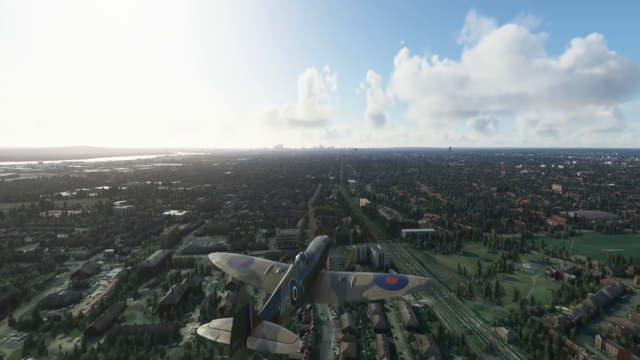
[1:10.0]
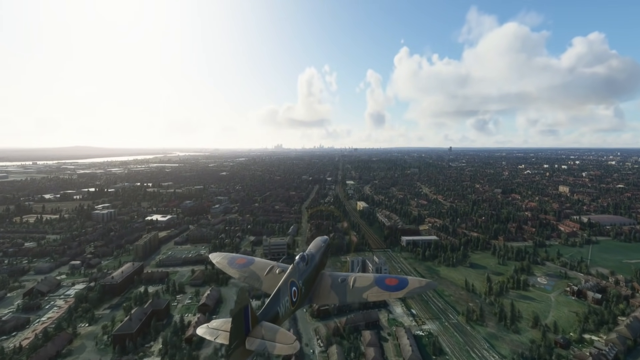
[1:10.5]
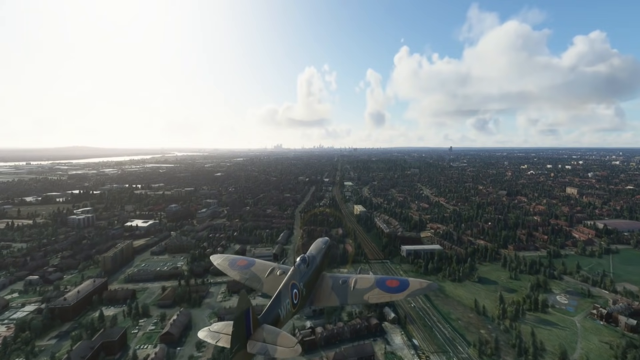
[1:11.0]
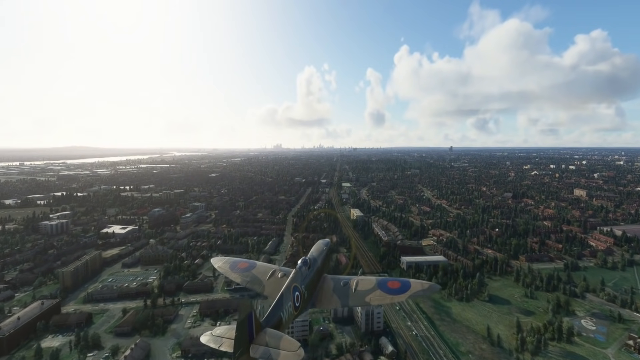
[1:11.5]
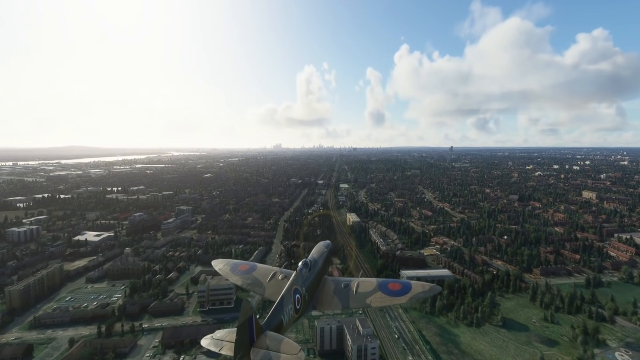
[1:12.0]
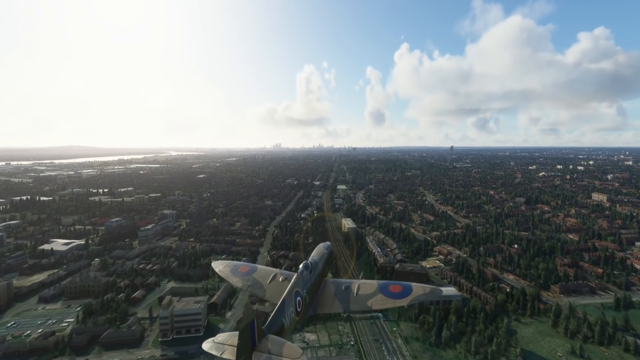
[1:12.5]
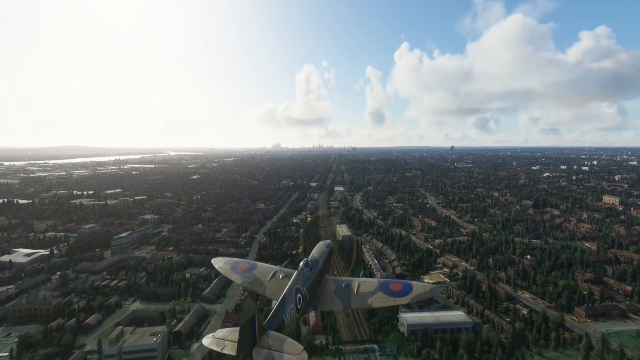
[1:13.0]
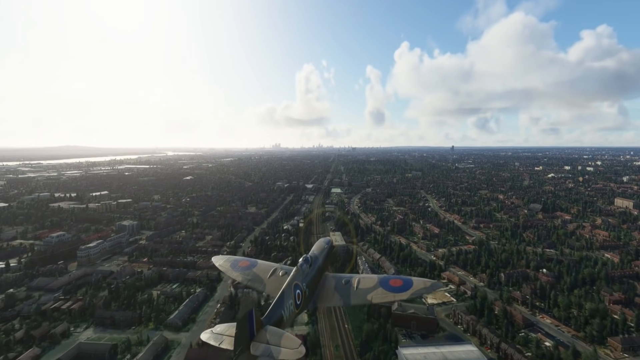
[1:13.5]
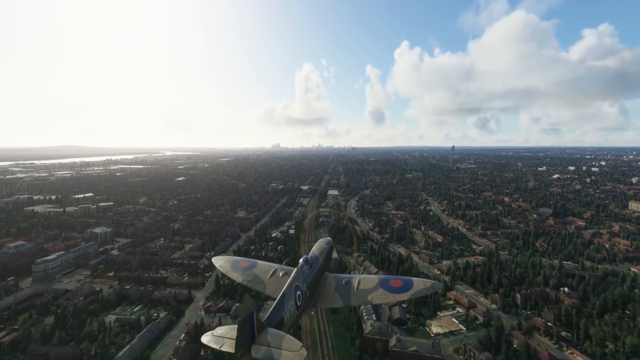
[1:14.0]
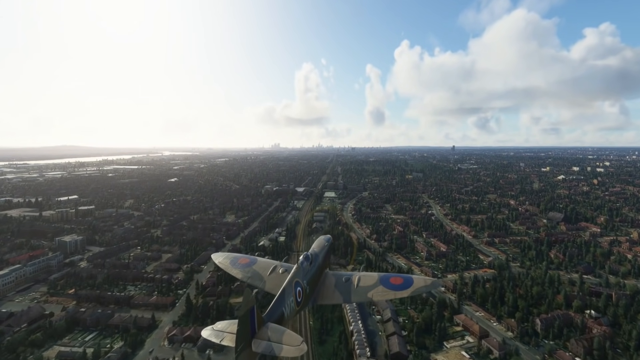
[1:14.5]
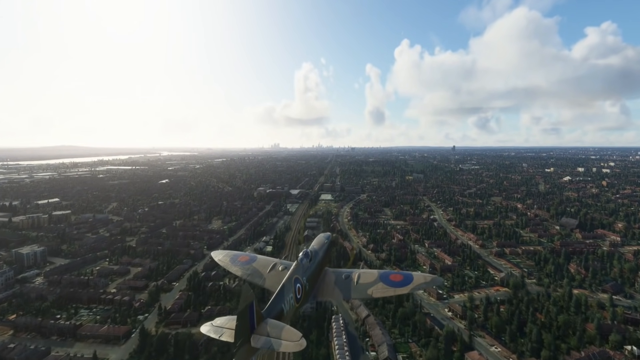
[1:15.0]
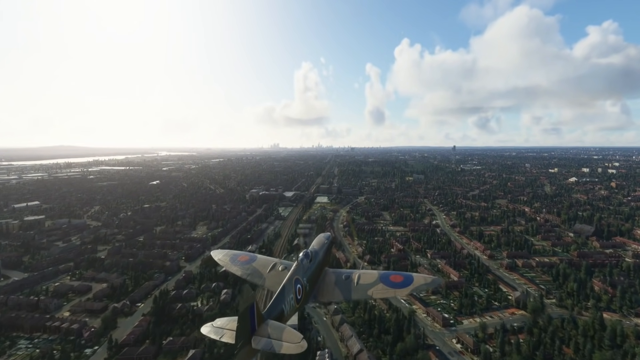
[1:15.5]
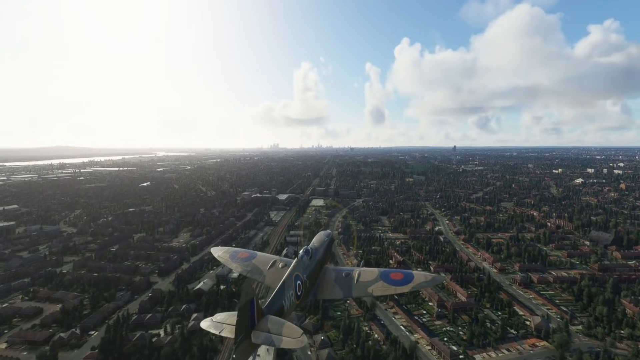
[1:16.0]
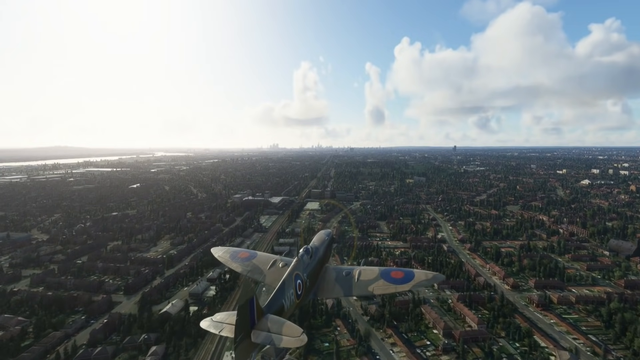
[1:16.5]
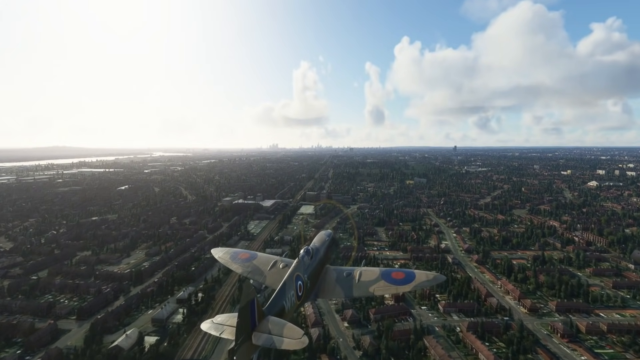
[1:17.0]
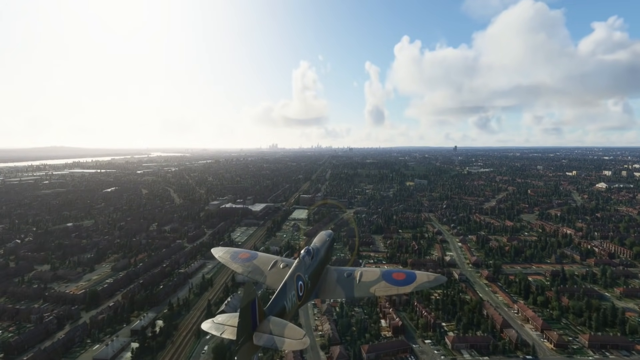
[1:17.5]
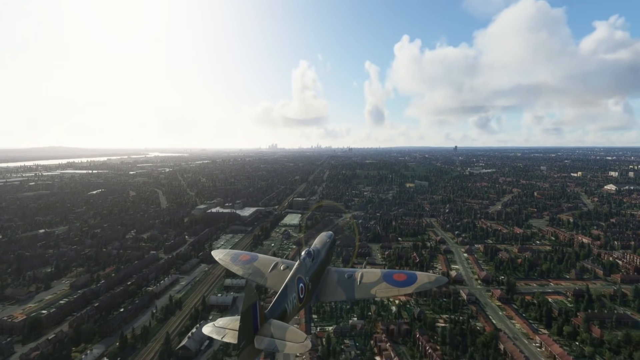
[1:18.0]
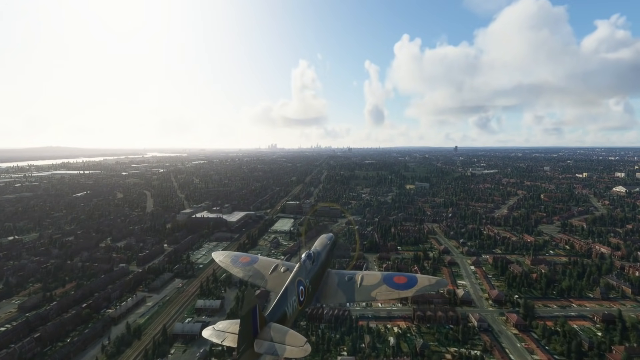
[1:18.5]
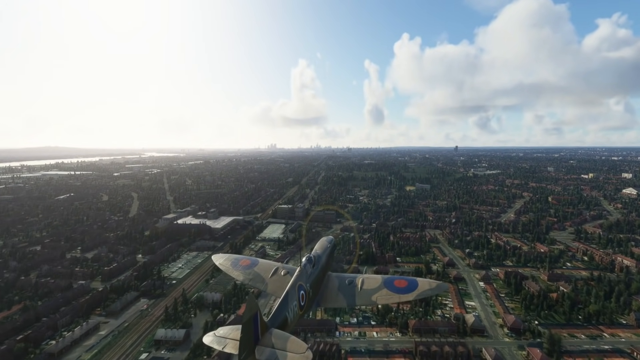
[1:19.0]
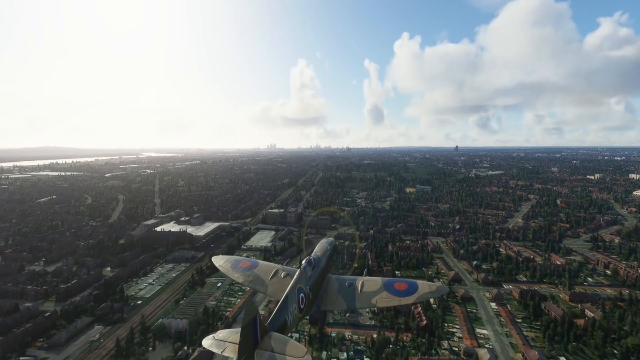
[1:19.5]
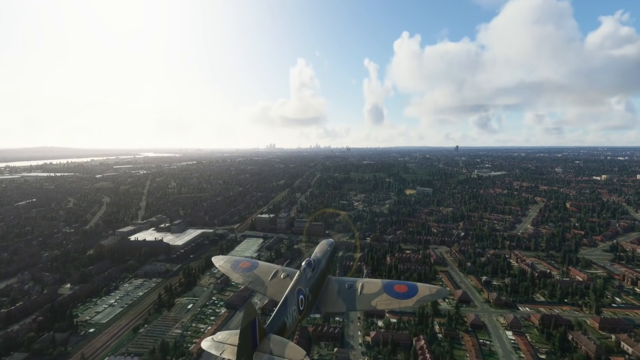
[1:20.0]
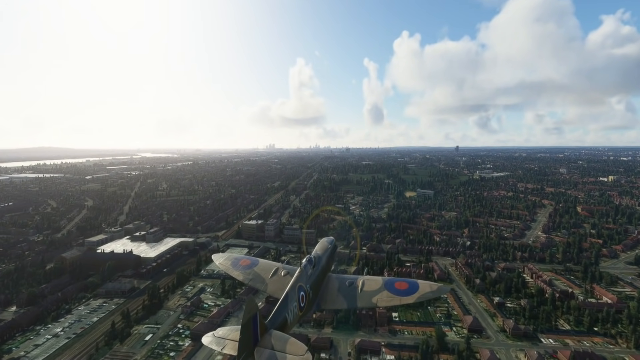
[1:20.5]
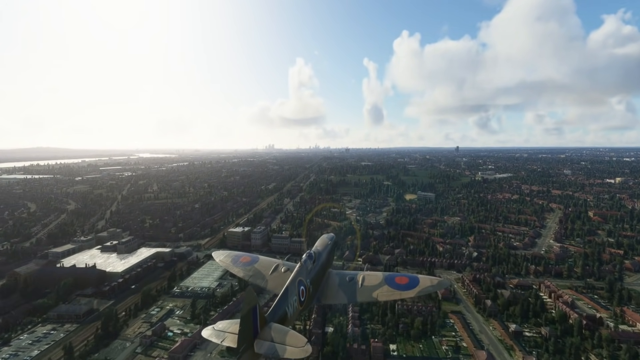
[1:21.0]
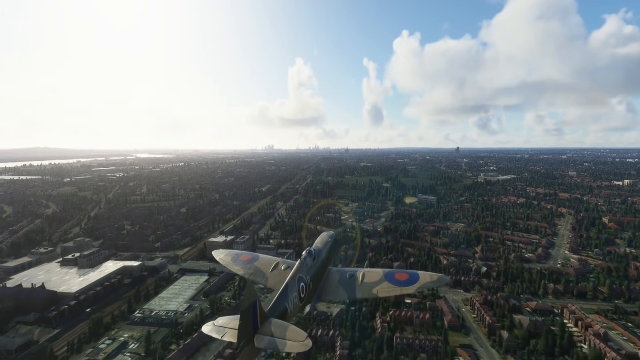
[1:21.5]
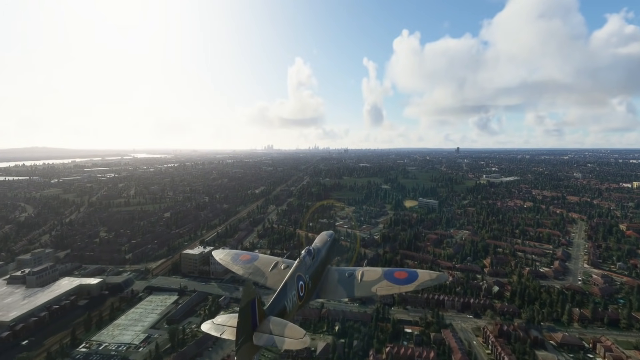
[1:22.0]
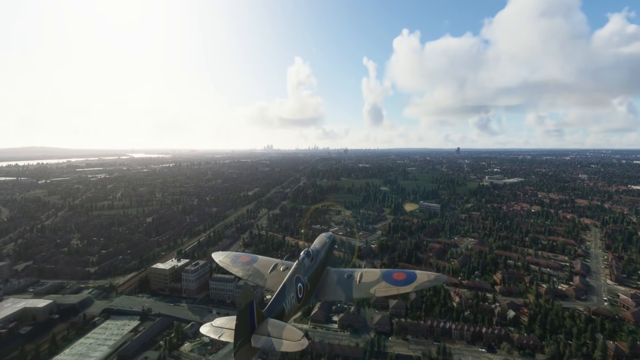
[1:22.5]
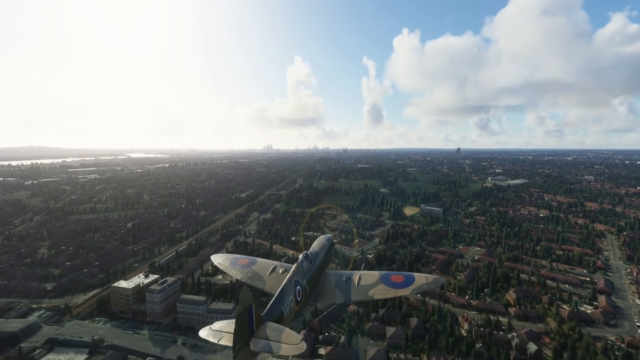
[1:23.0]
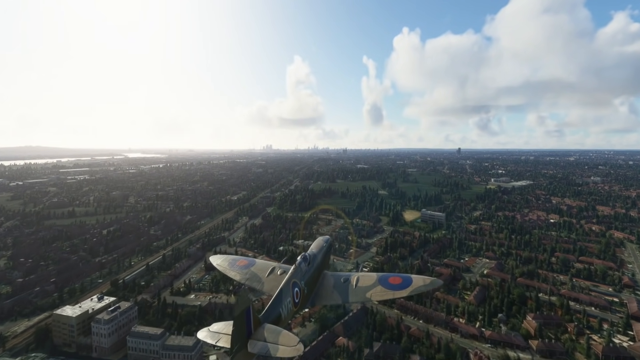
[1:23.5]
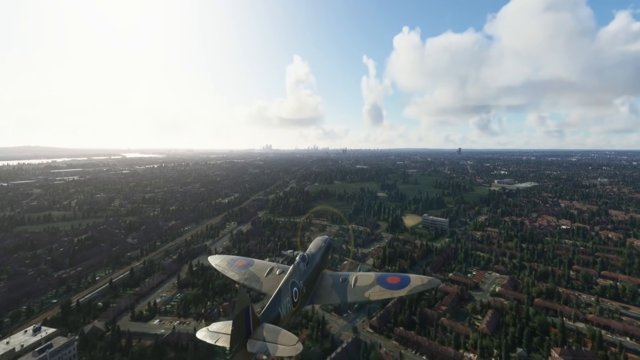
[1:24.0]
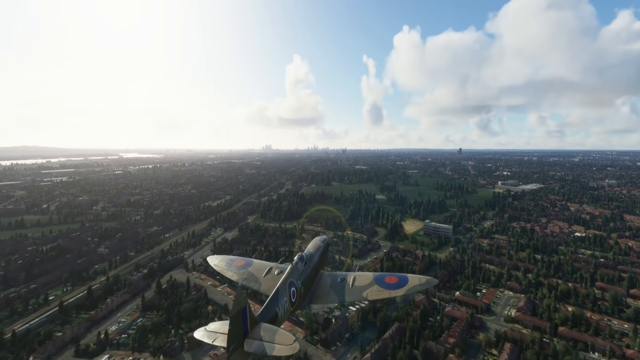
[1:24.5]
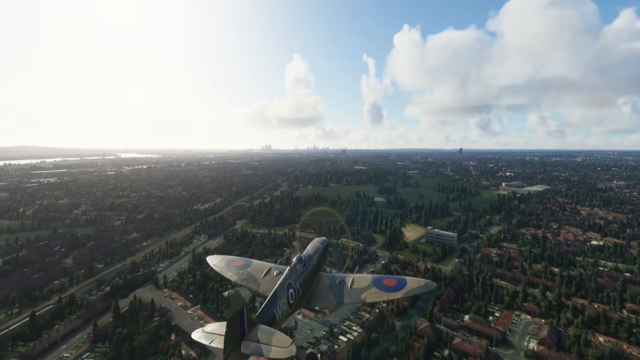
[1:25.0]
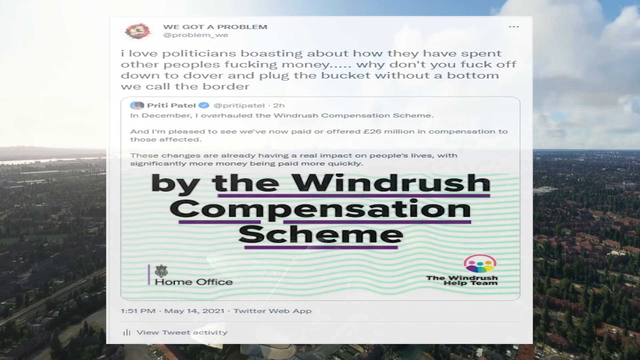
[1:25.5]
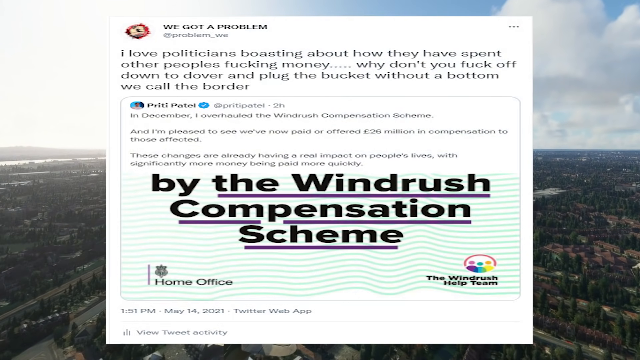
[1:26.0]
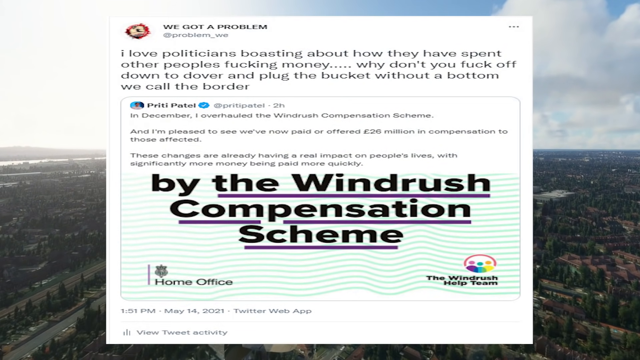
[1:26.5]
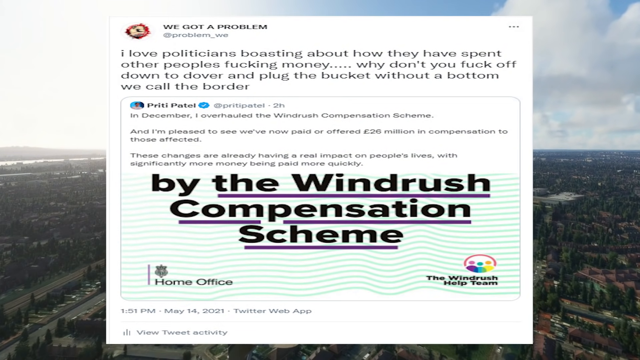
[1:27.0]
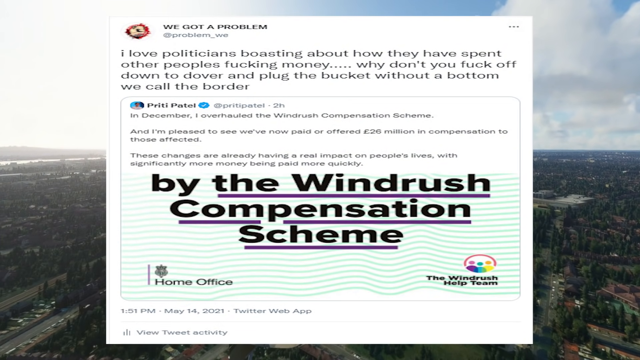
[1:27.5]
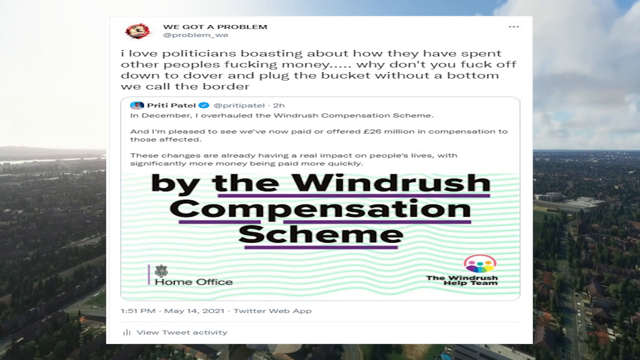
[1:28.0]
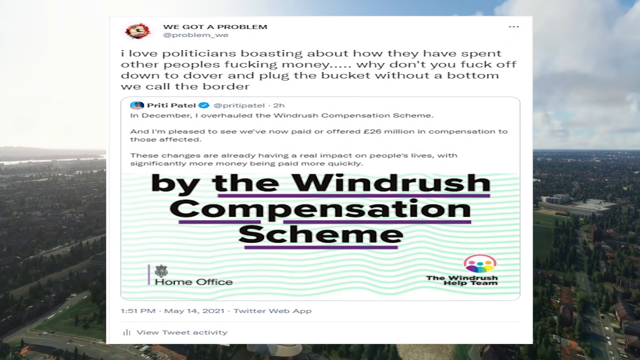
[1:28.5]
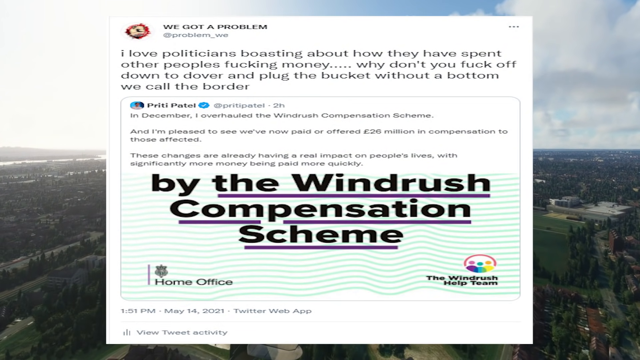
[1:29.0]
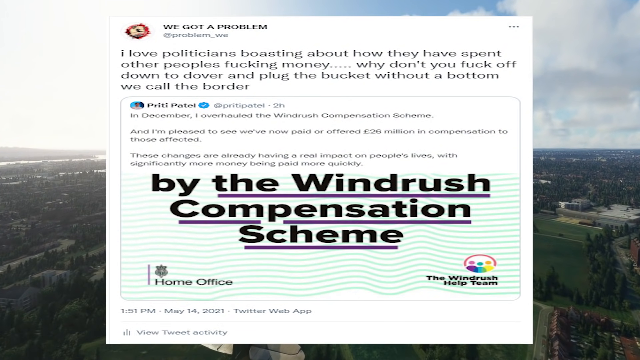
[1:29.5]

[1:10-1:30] A tan crop duster plane flies very low over land. It has almost graffiti-like graphic pictures on it, including a circle of something pink with blue around it. The plane is shown in a lot of detail, with the circle of the propeller moving in front, and it flies close enough to the ground that trees, houses and roads are visible. A pop-up then appears saying "by the Windrush compensation scheme" in big bold letters. At the top is a posting that says "we got a problem" and goes on to explain the situation, using the F word in the description. The plane keeps flying behind the pop-up, and on either side of the document the ground is still moving.